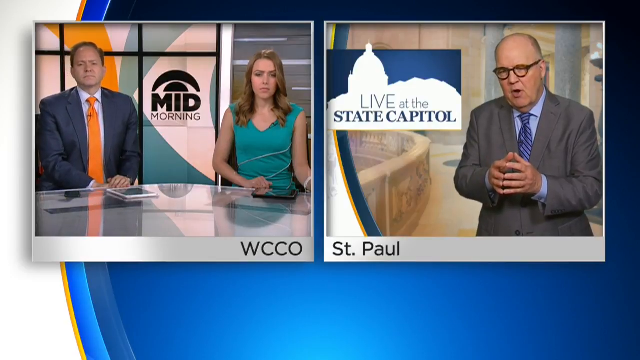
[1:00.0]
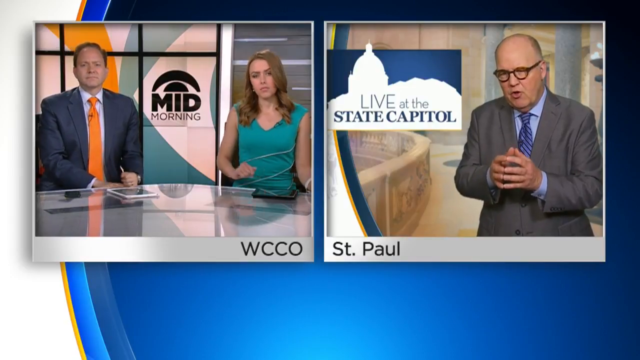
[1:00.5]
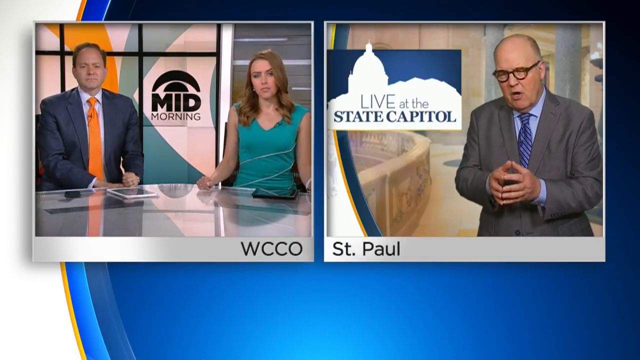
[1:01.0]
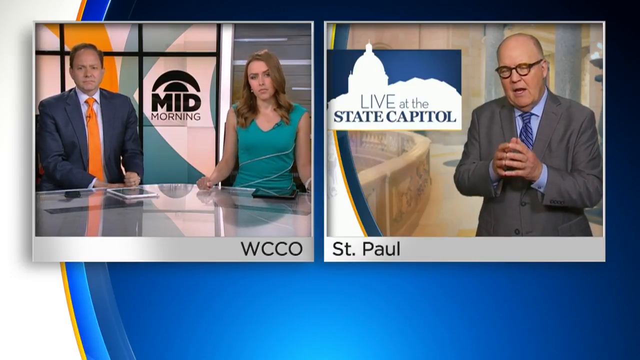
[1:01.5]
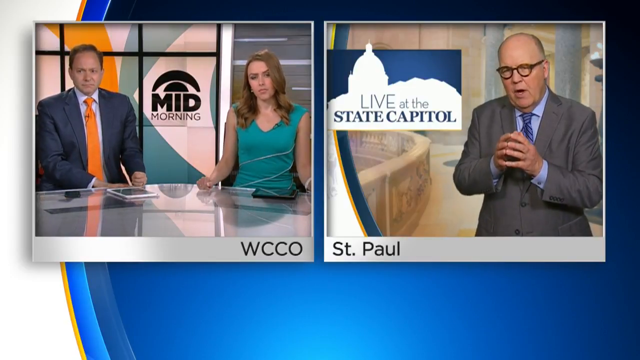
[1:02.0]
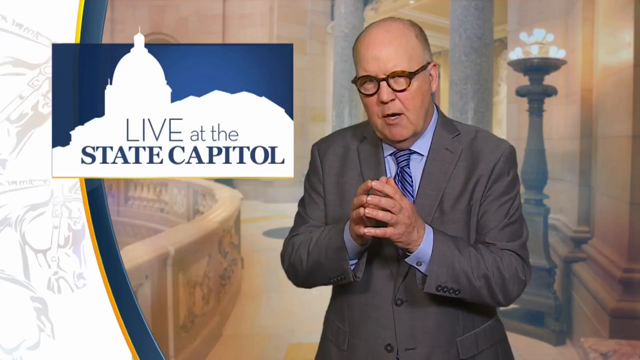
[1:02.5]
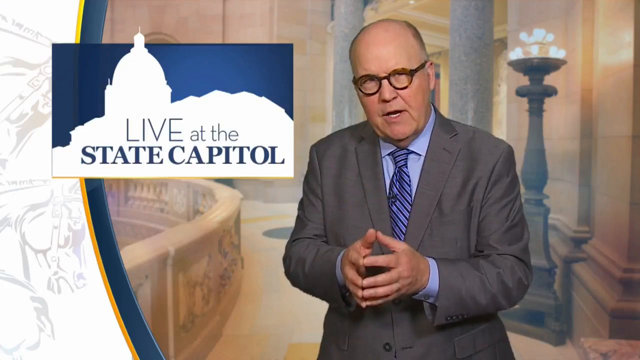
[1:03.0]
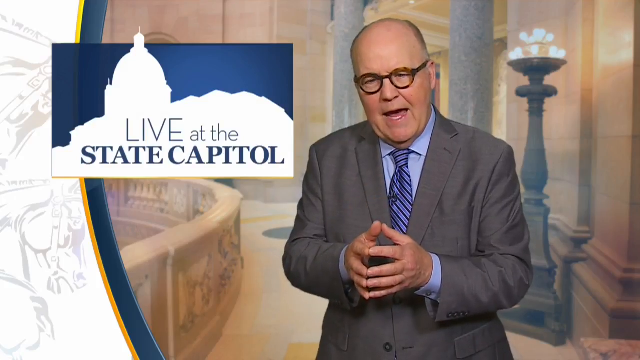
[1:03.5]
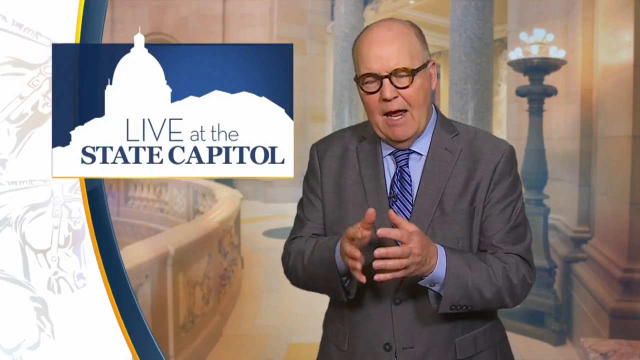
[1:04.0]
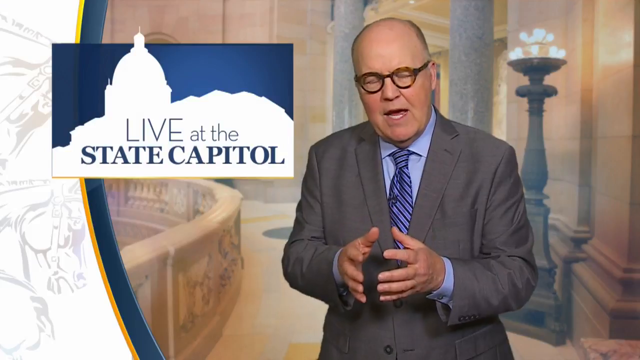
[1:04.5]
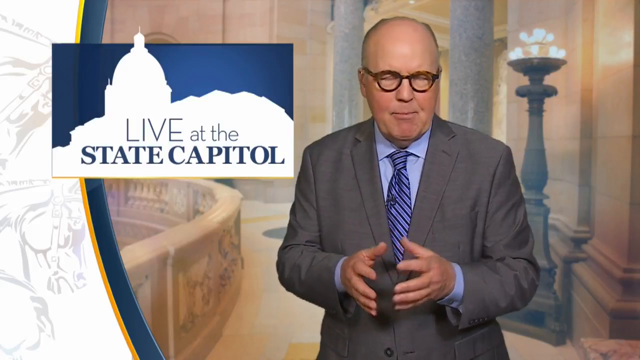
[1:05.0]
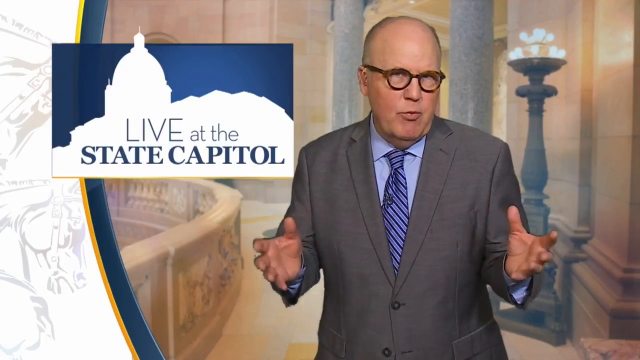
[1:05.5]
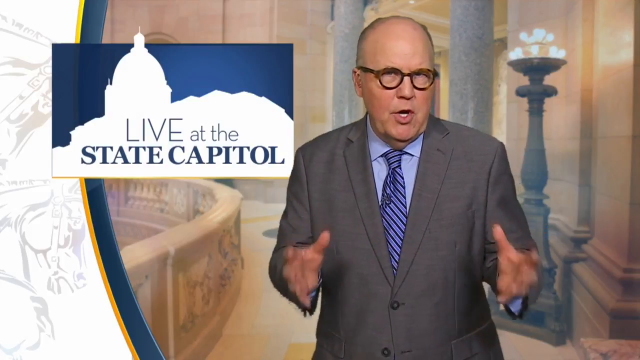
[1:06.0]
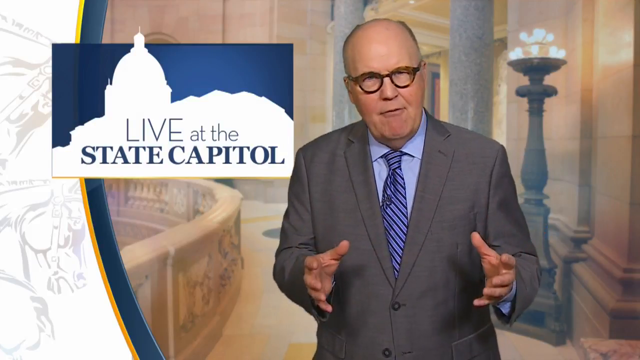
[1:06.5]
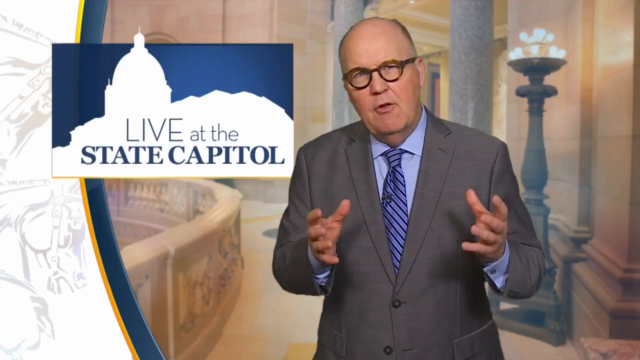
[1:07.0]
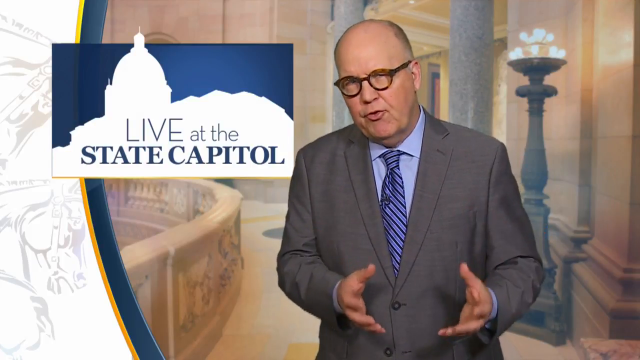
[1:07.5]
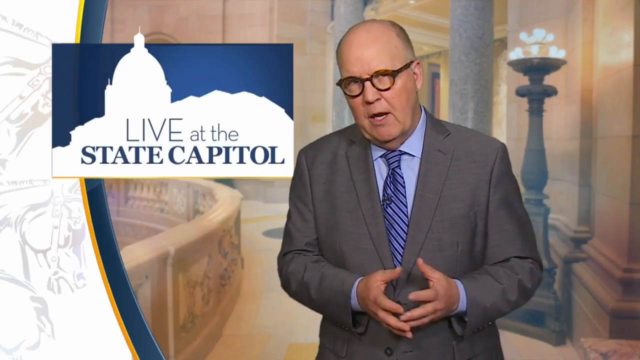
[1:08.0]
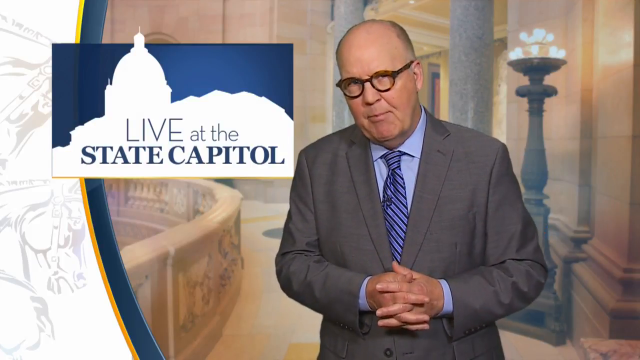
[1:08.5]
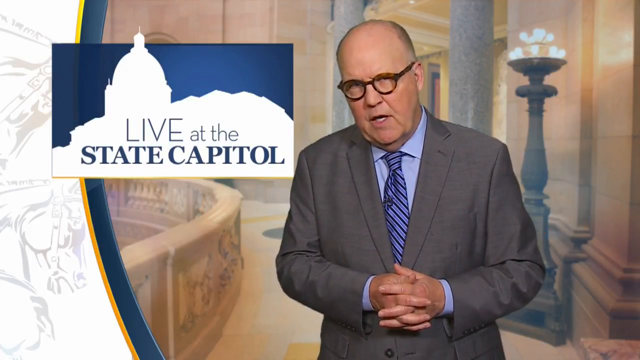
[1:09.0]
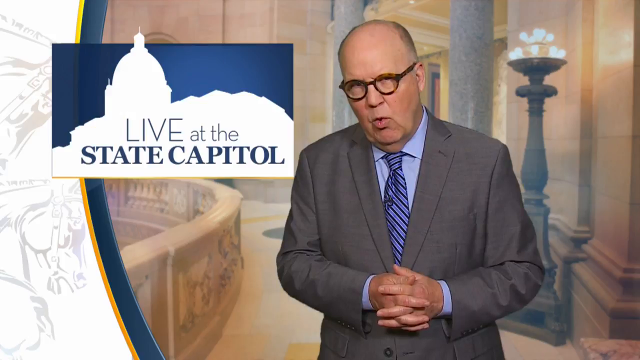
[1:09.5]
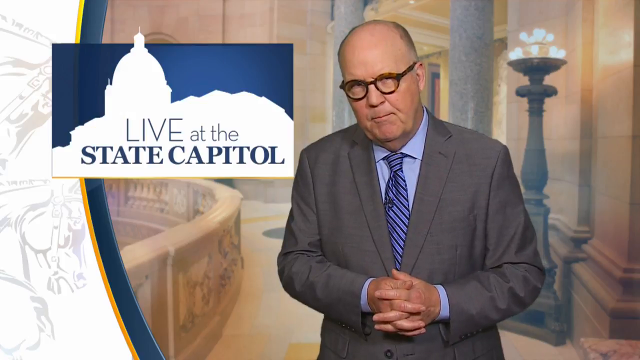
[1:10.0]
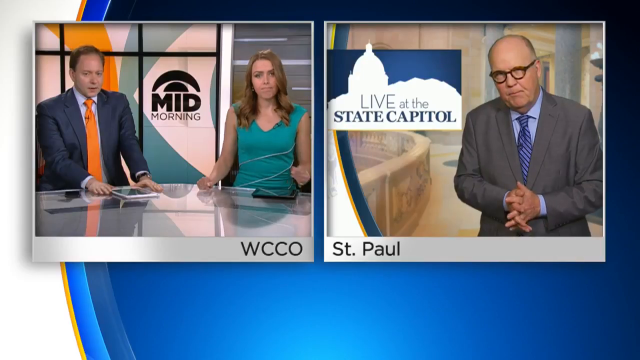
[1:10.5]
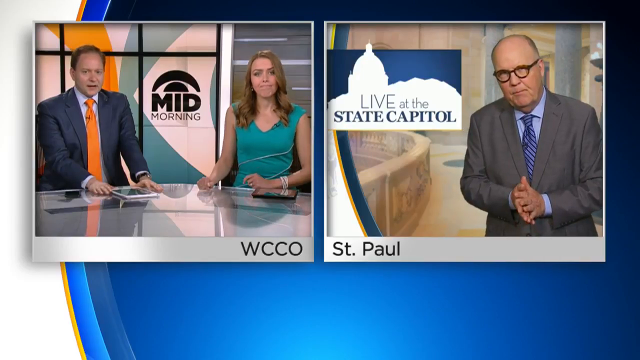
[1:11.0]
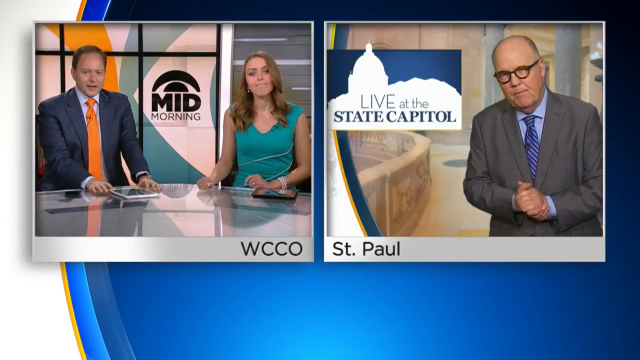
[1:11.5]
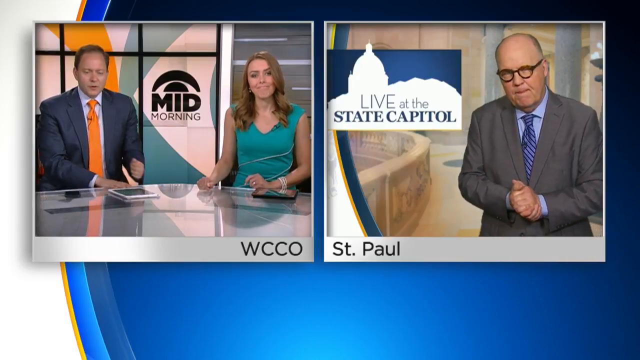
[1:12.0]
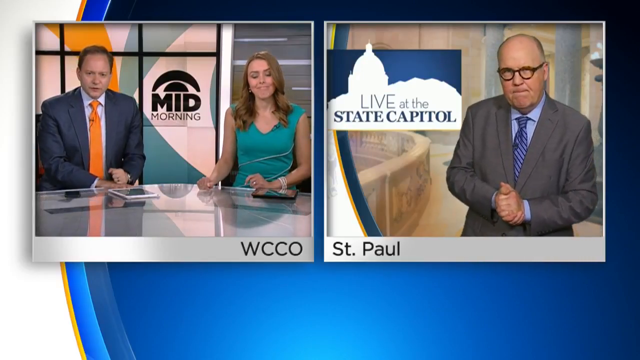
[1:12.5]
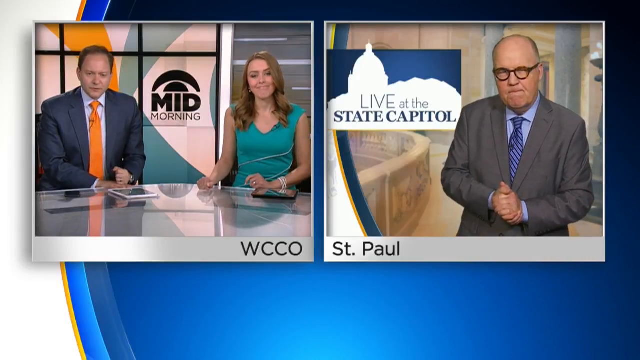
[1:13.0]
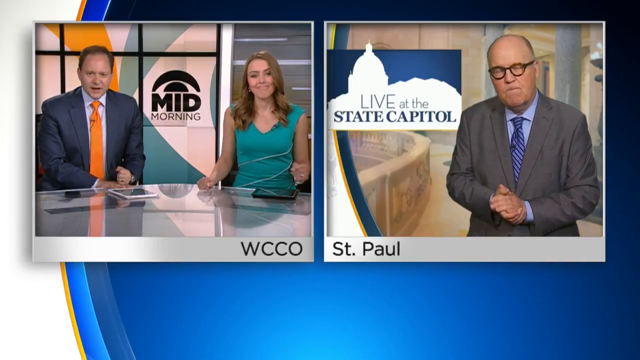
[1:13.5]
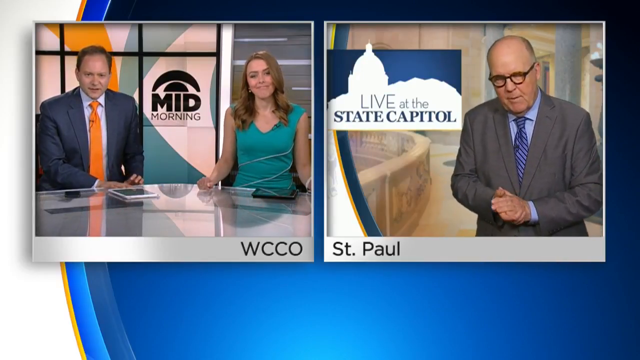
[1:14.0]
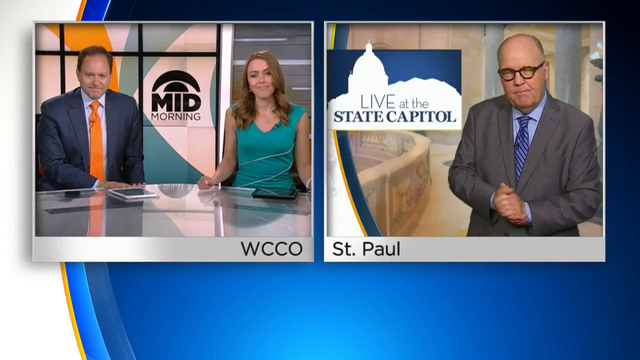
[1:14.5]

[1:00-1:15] All three people appear in a split screen, WCCO and St. Paul, in a brief exchange. The view then goes back to the man live at the state capitol, with a sign on the screen that says "live at the state capitol". The screen then leaves him and returns to WCCO mid-morning with Jason and the woman in the studio, looking down.